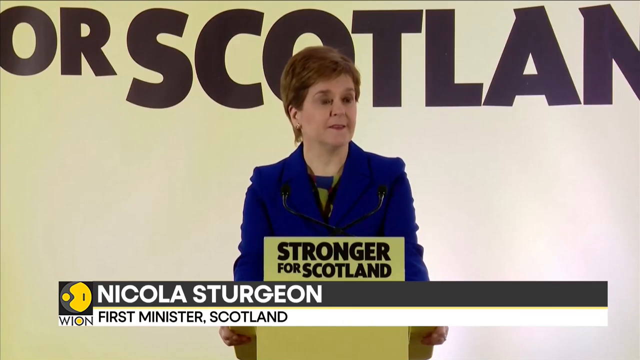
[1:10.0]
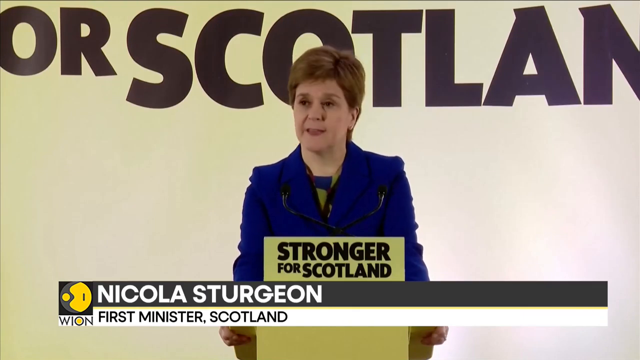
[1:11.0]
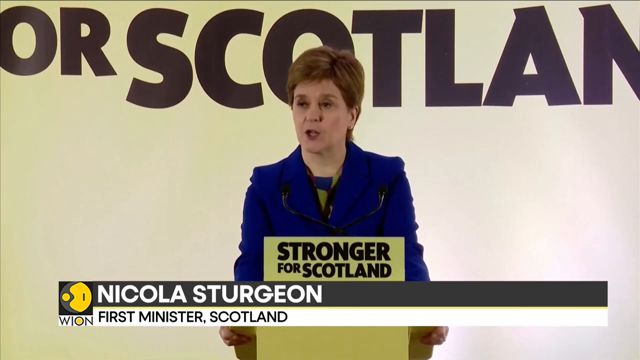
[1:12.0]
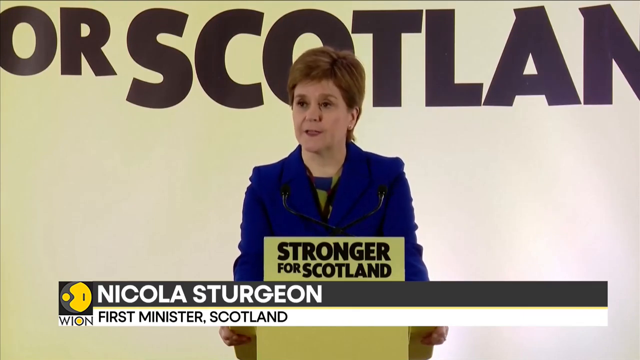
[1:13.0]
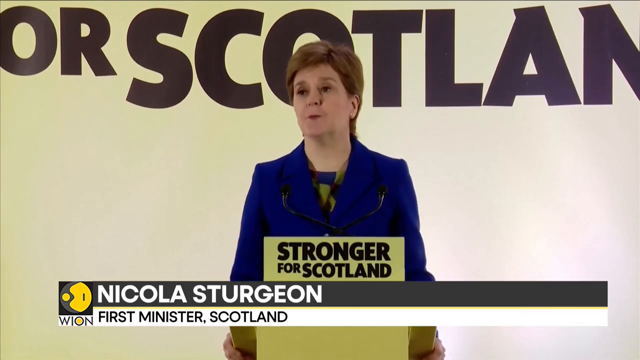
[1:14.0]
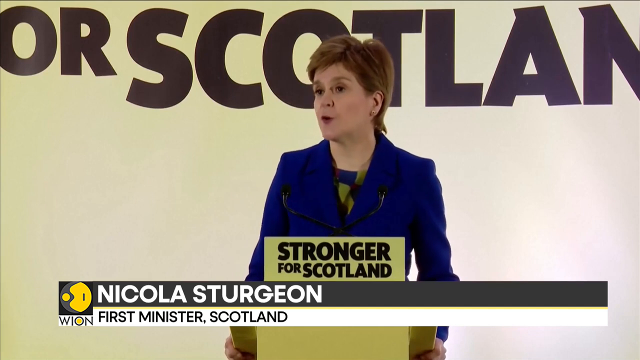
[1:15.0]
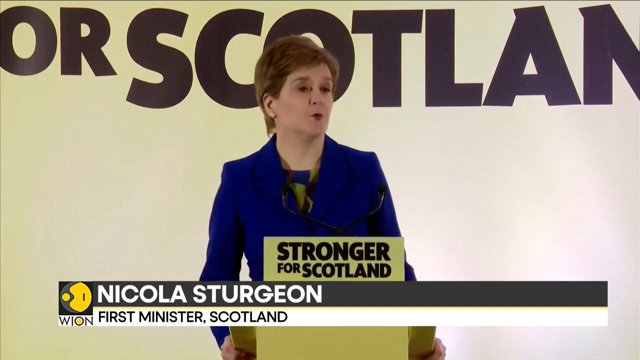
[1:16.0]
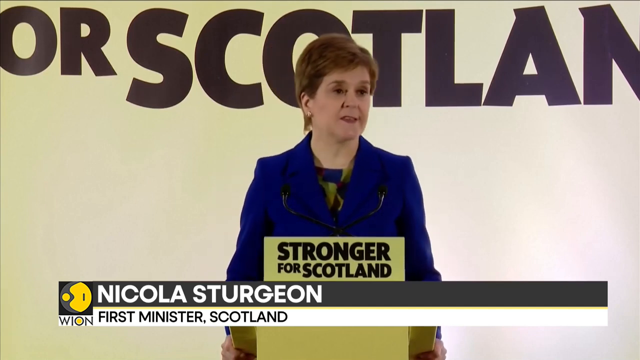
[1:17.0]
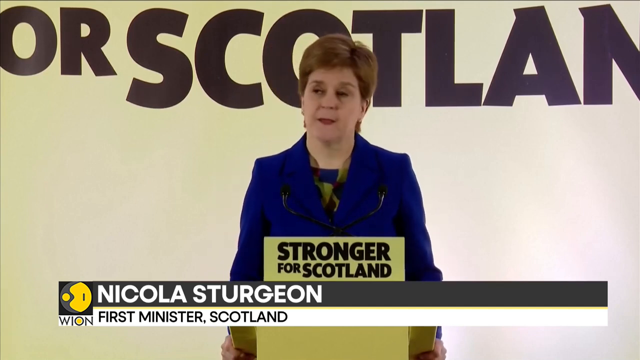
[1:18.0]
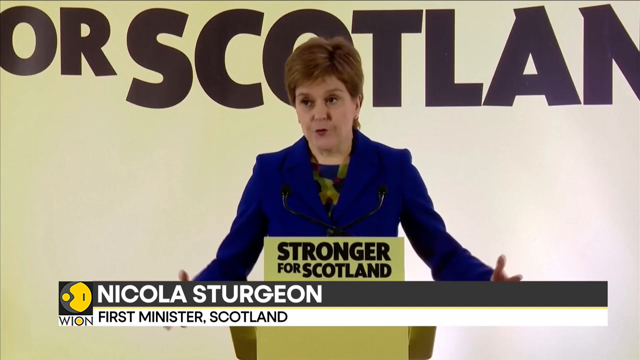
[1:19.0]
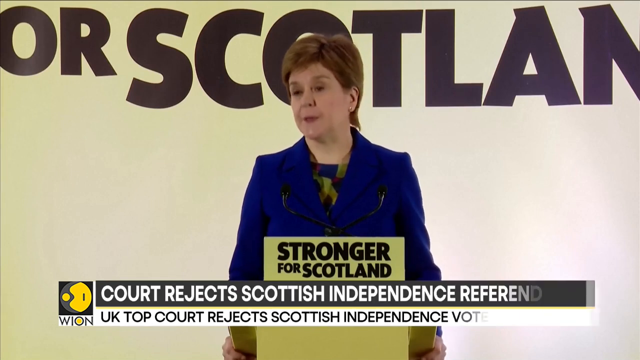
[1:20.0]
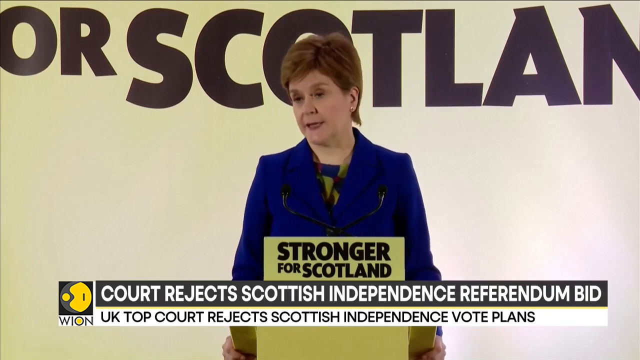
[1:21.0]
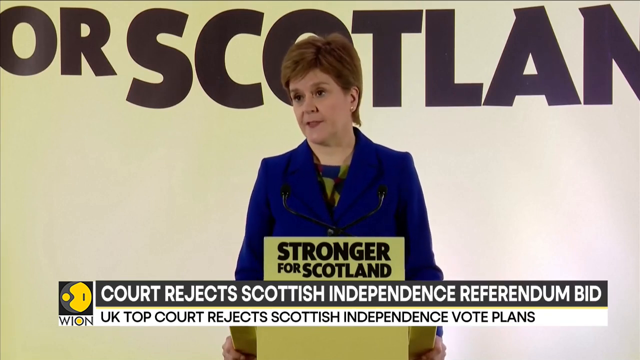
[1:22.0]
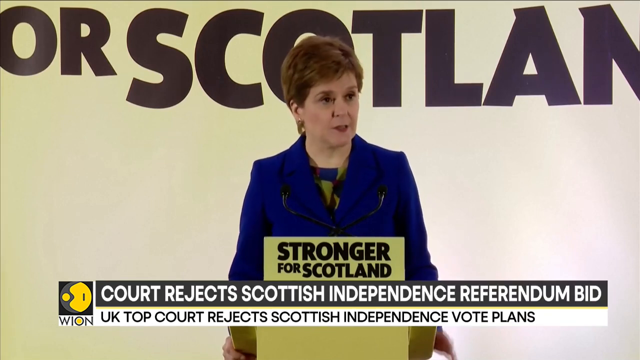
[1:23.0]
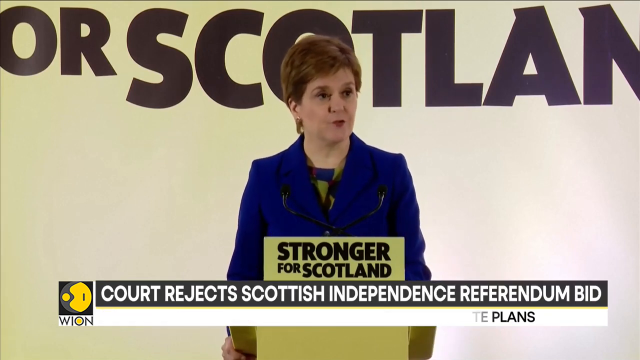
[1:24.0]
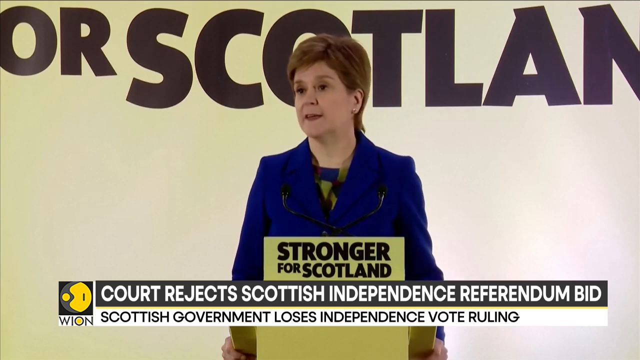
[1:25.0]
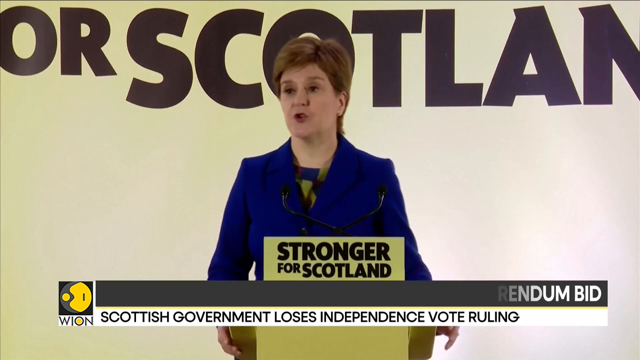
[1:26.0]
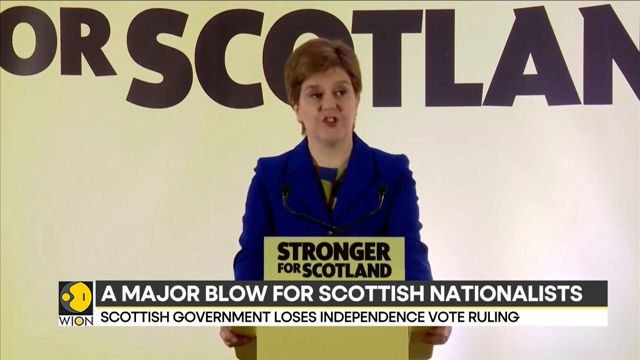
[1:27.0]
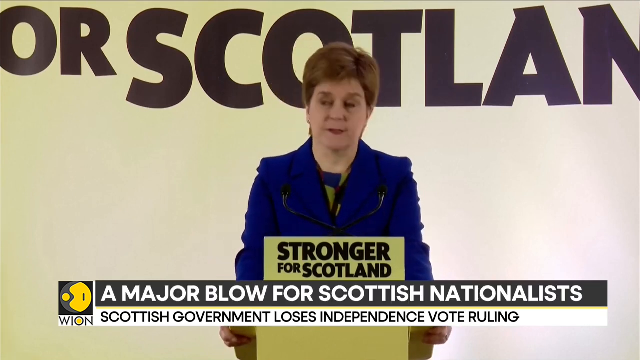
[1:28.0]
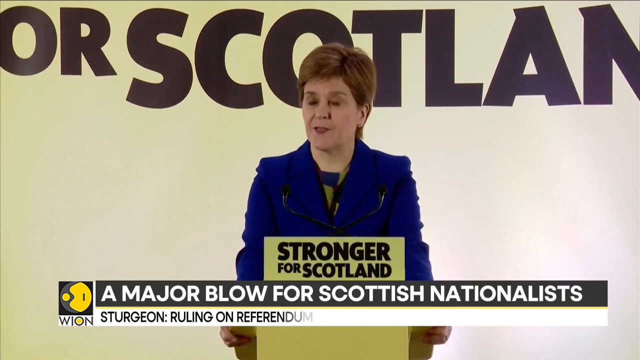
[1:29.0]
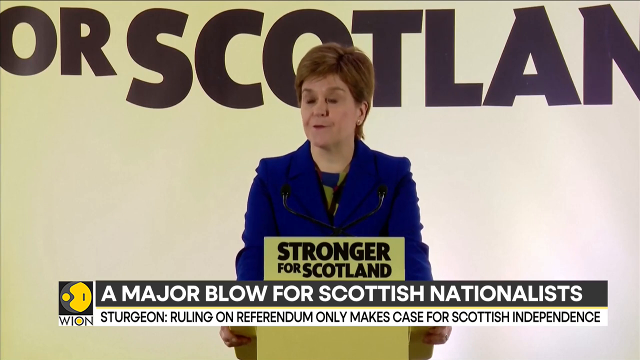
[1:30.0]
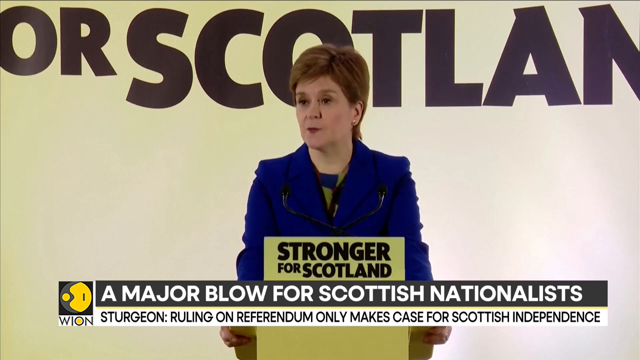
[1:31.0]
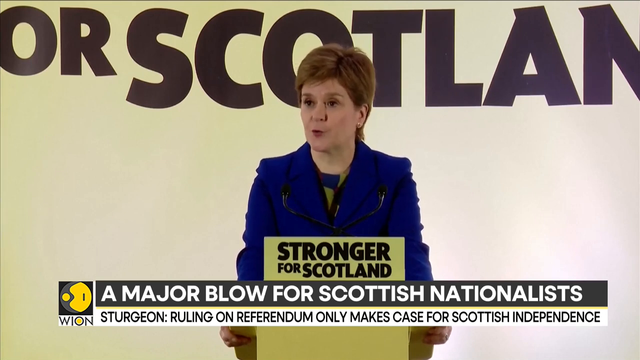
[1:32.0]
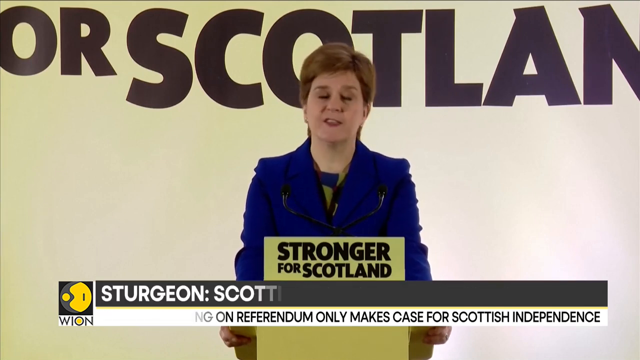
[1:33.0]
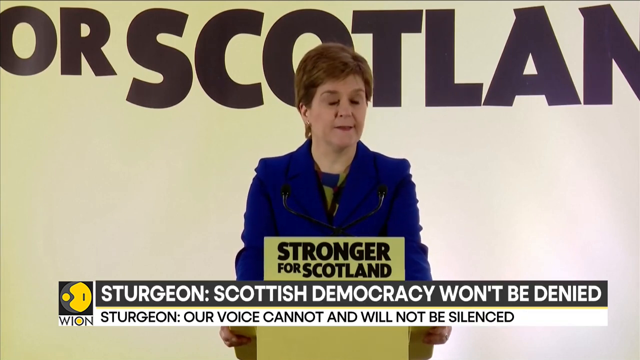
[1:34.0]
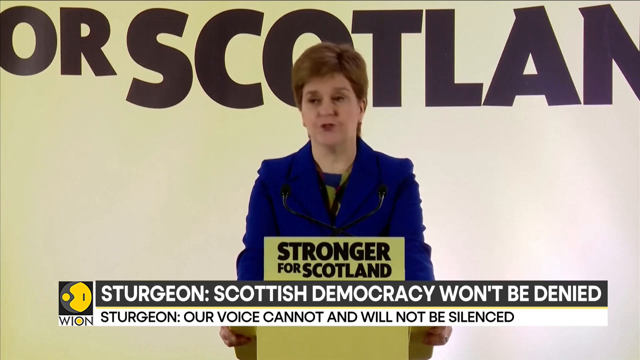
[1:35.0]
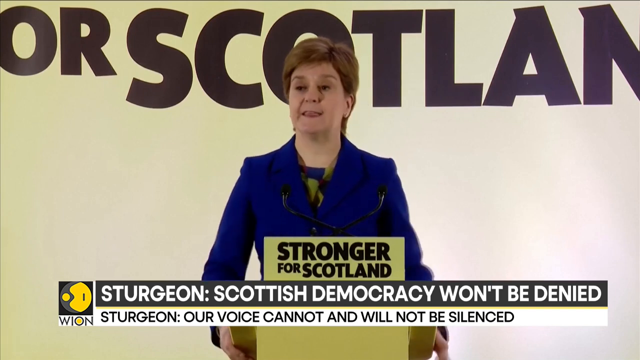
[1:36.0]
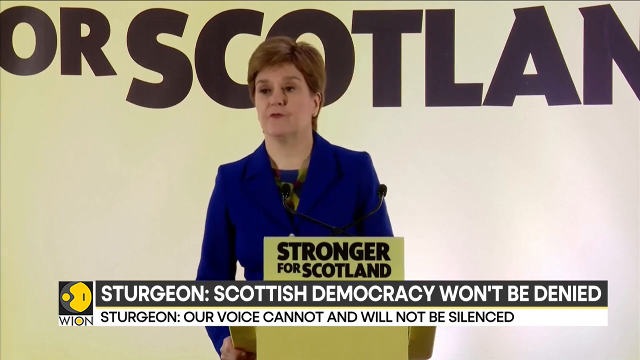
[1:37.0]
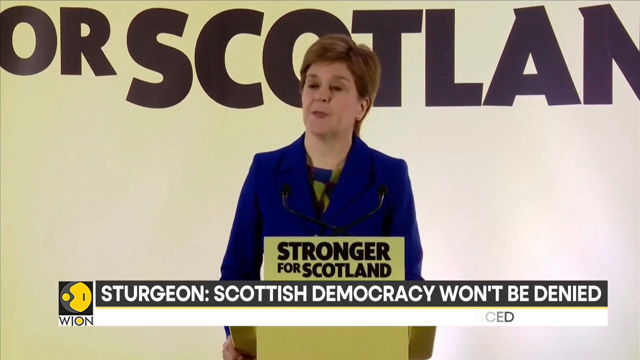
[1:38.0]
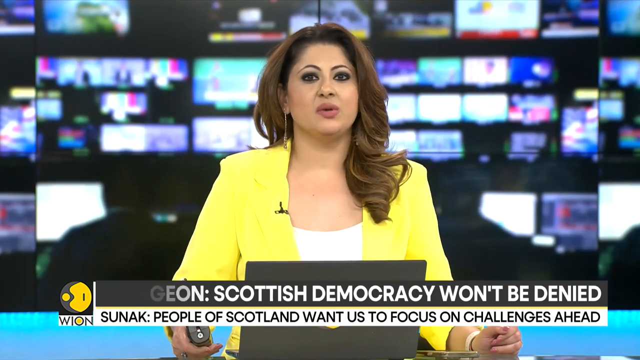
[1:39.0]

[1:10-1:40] The woman is Nicola Sturgeon, the First Minister of Scotland. She seems to be making a rousing speech for her party, Stronger for Scotland, apparently at a press conference, speaking in a passionate tone; her facial expression might express frustration, anger or disappointment. The video then returns to the anchorwoman from the beginning, who seems to be making a closing comment of some sort, maybe moving on from the story.